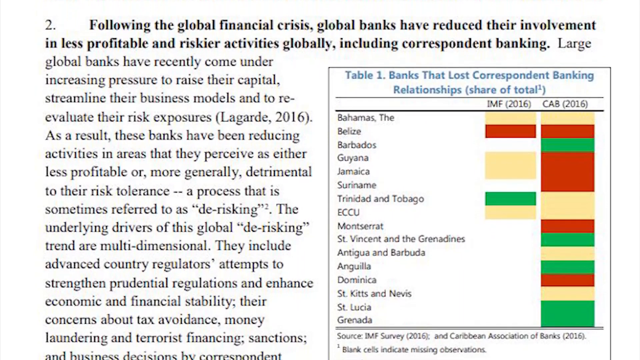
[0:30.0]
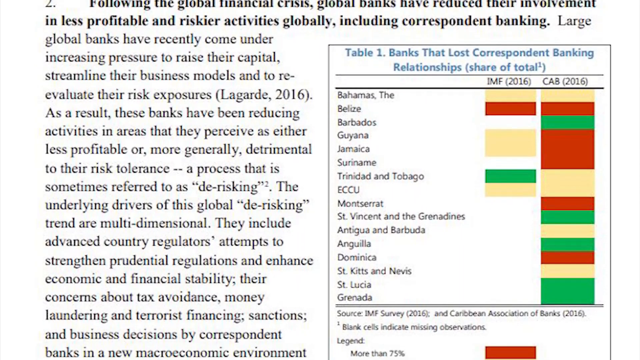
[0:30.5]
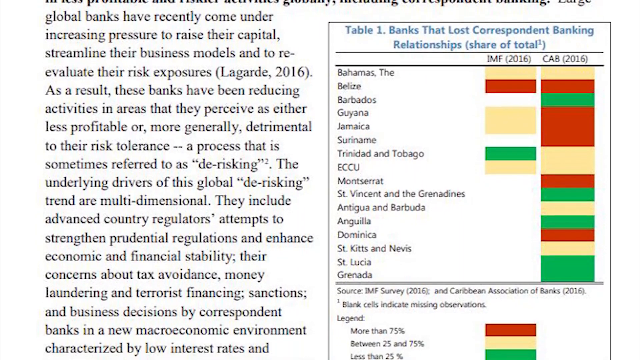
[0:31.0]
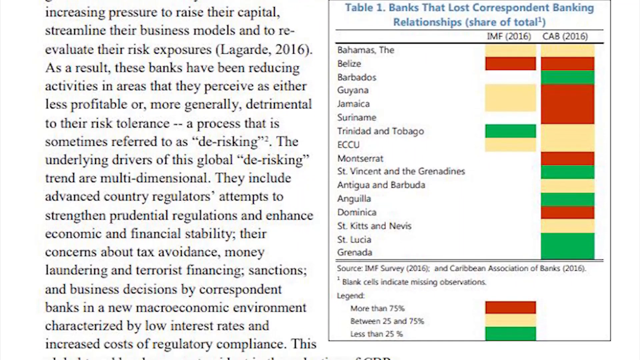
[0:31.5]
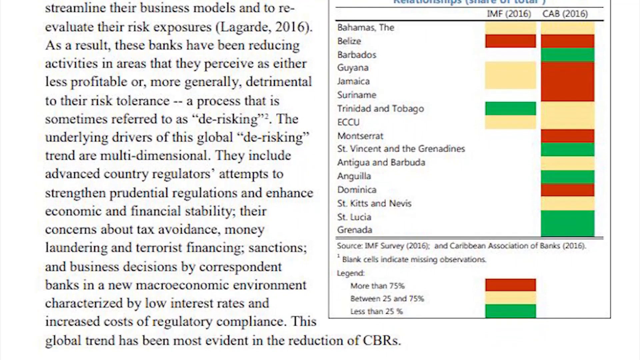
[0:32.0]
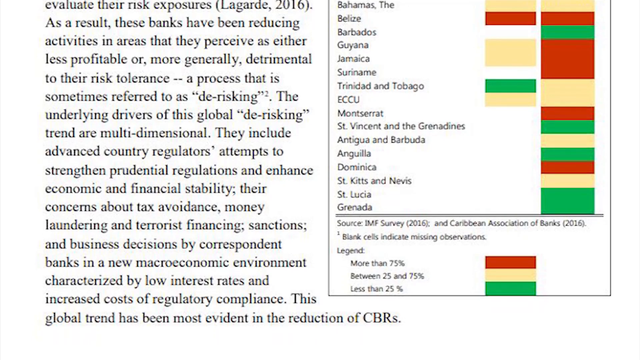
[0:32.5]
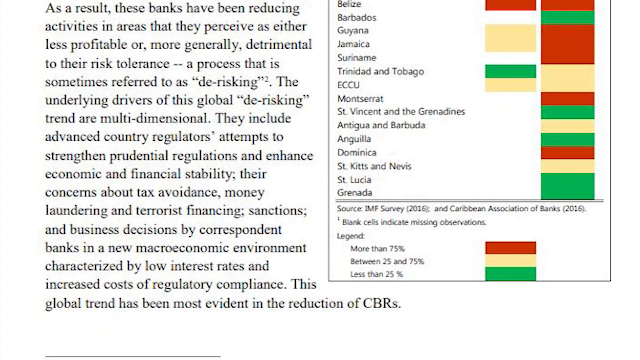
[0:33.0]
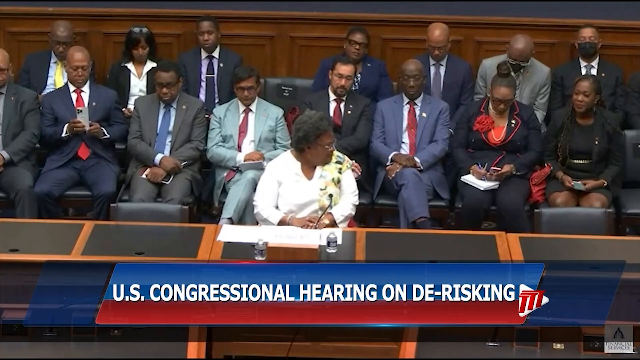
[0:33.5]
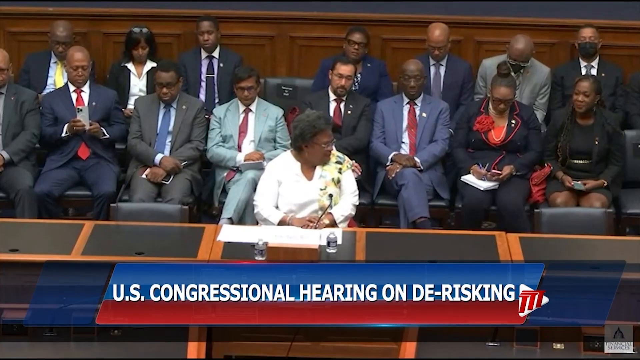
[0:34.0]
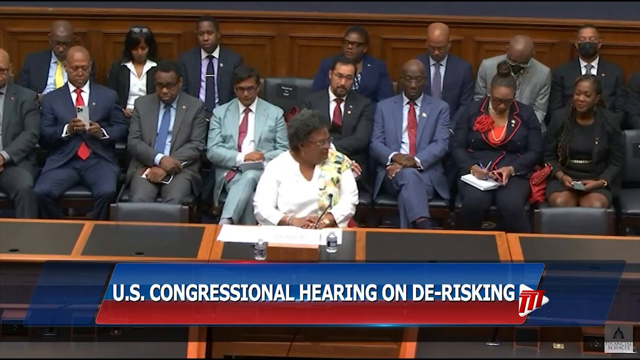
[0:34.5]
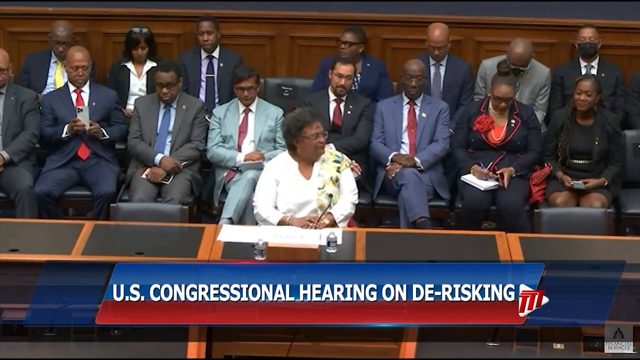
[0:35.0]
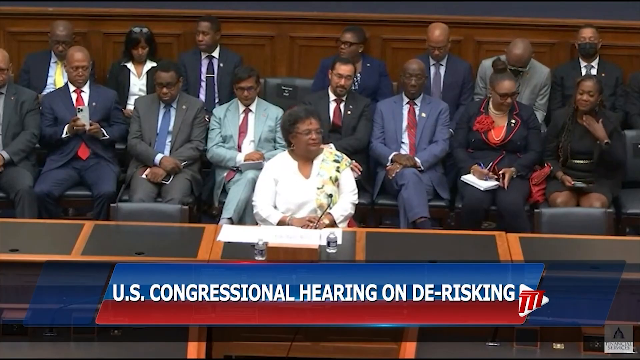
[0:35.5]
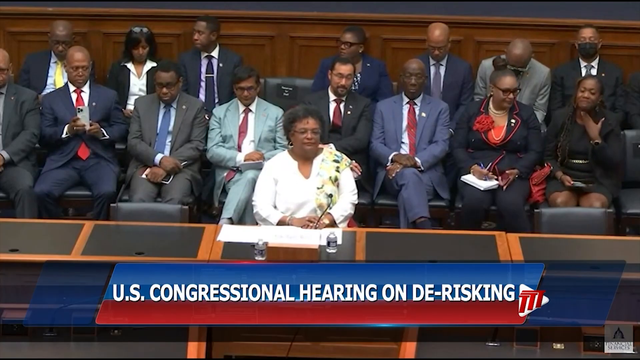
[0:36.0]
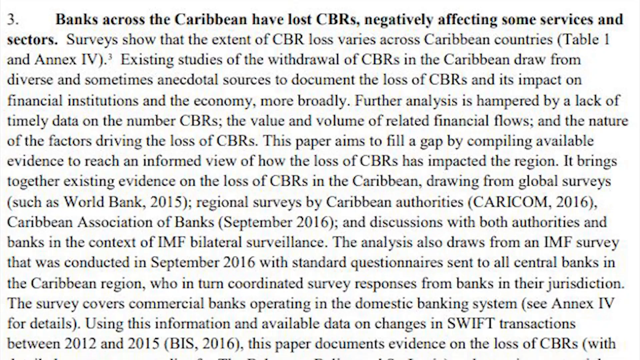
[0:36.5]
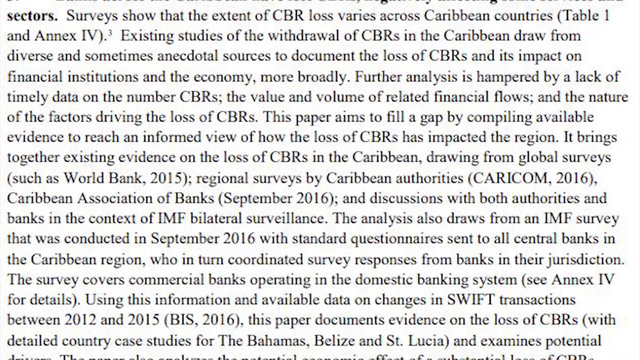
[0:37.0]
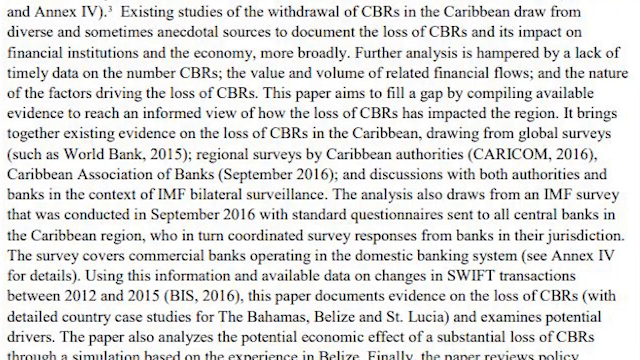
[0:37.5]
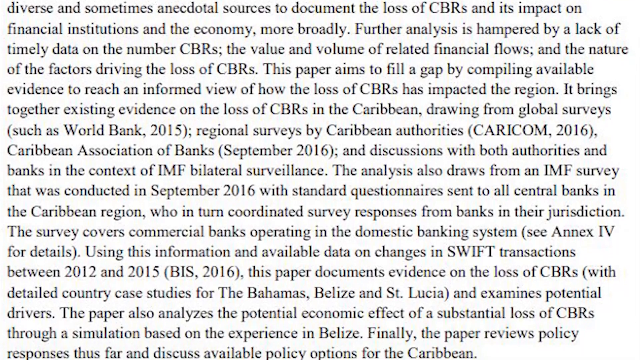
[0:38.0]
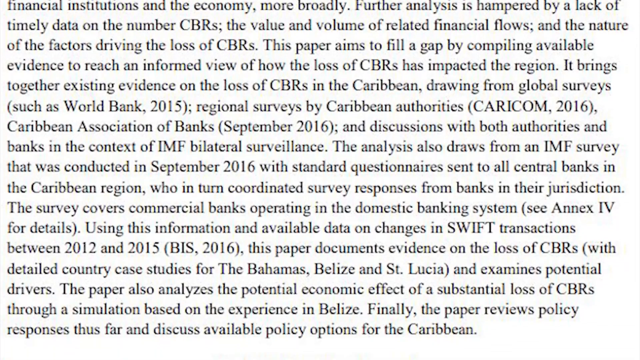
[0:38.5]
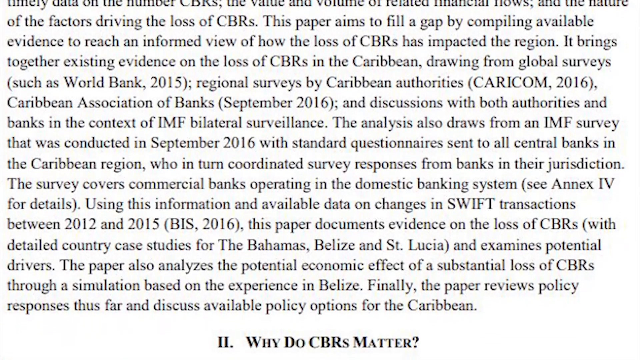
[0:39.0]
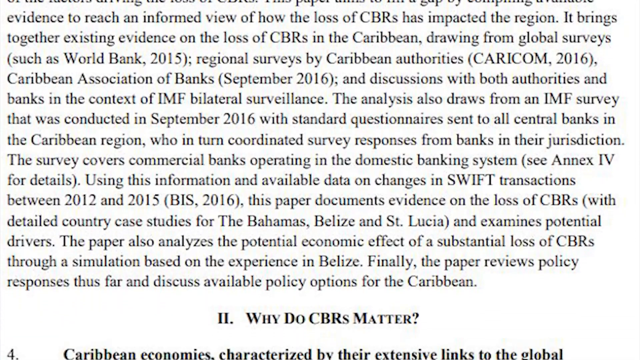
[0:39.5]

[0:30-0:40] A document continues on screen. Bold text reads "following the global financial crisis, global banks have reduced their involvement in less profitable and riskier activities globally, including correspondent banking." The text then switches to regular black font, no longer bold, and reads "large global banks have recently come under increasing pressure to raise their capital, streamline their business models, and to reevaluate their risk exposures." A citation in parentheses reads "LAGARDE, 2016". The text continues "as a result, these banks have been reducing activities in areas that they perceive as" riskier.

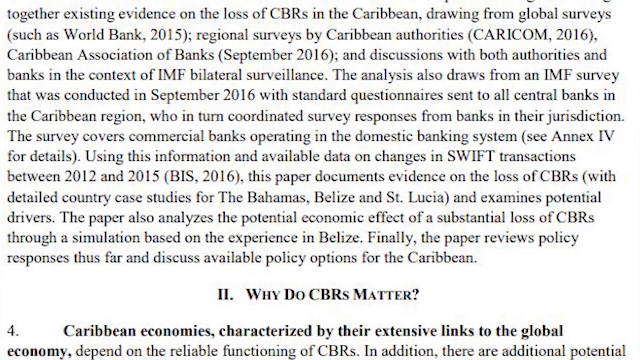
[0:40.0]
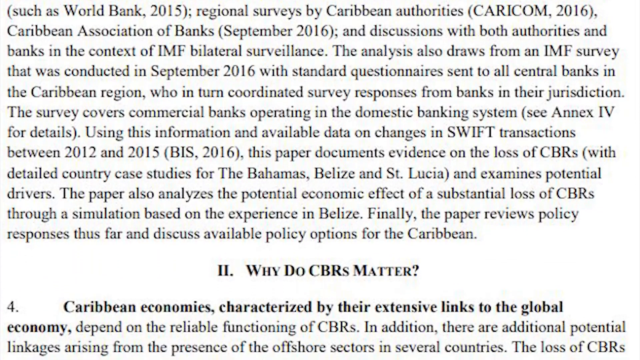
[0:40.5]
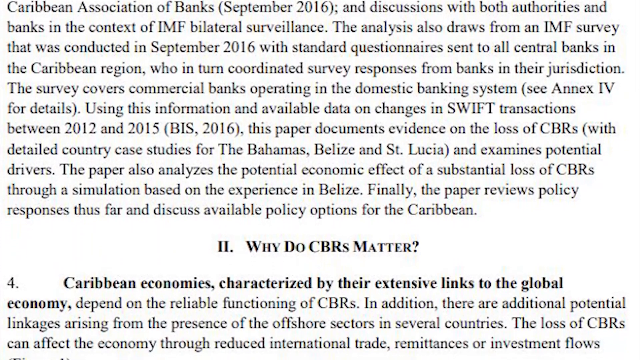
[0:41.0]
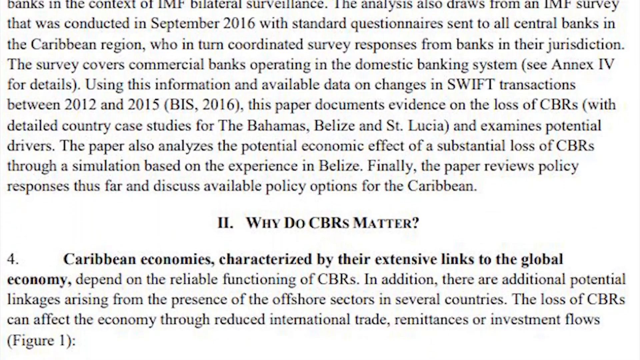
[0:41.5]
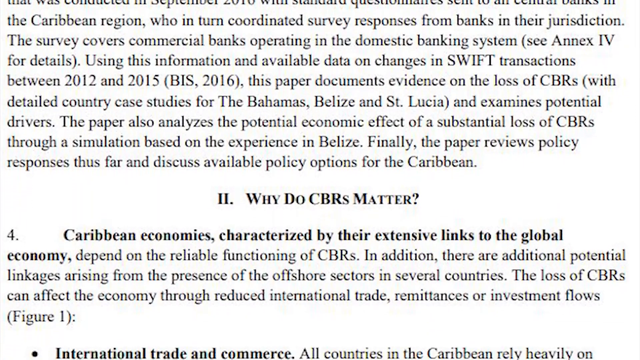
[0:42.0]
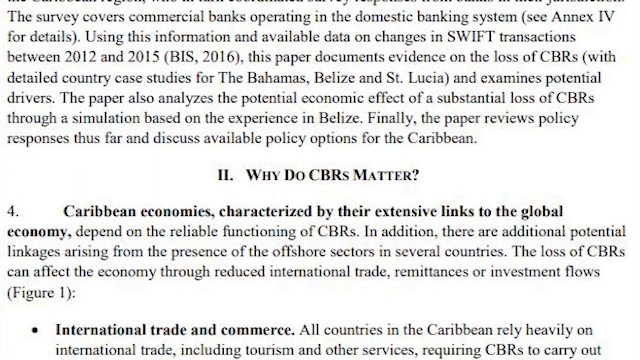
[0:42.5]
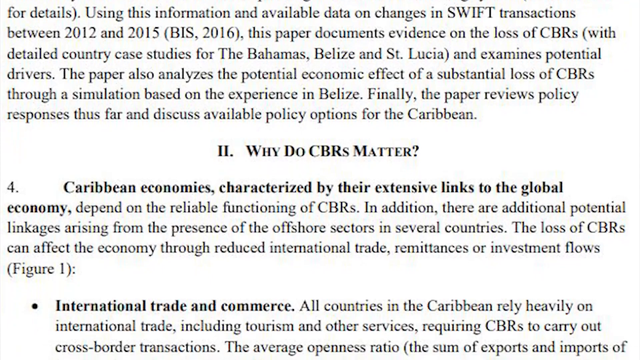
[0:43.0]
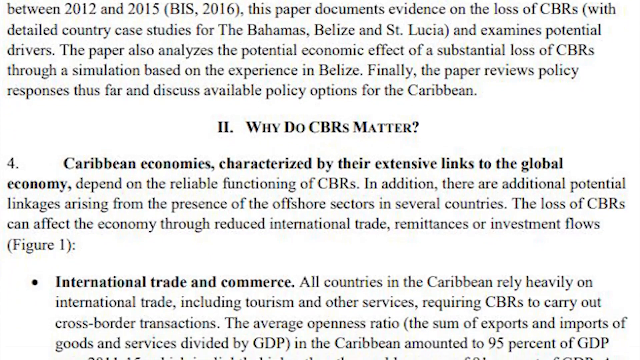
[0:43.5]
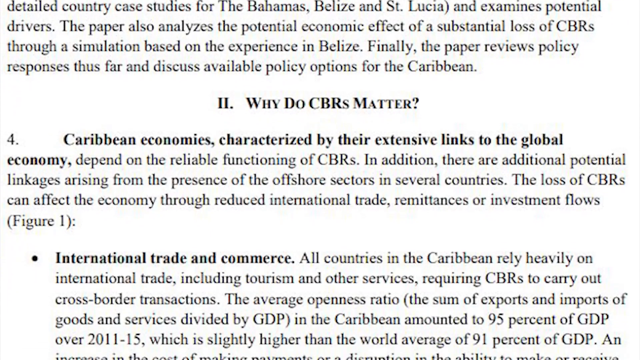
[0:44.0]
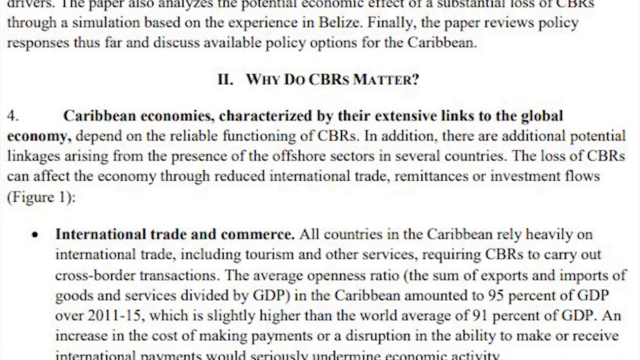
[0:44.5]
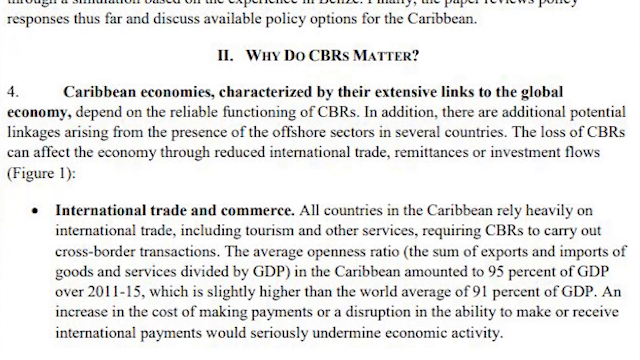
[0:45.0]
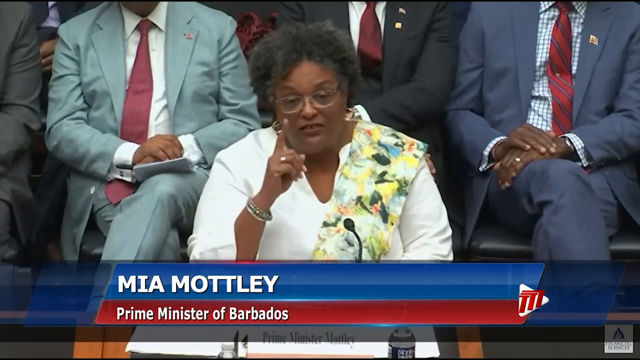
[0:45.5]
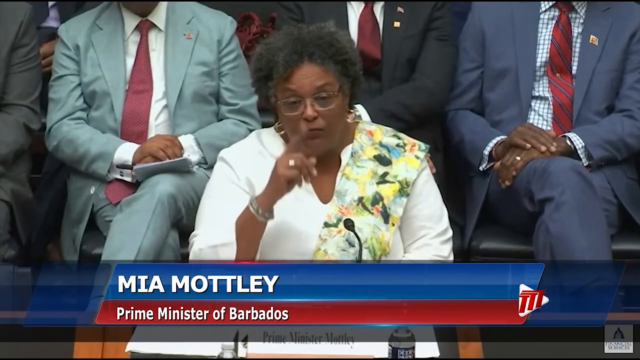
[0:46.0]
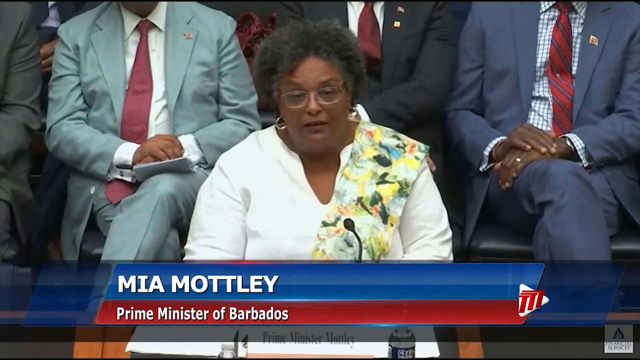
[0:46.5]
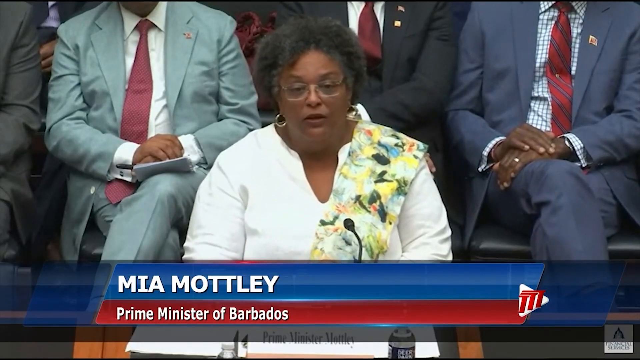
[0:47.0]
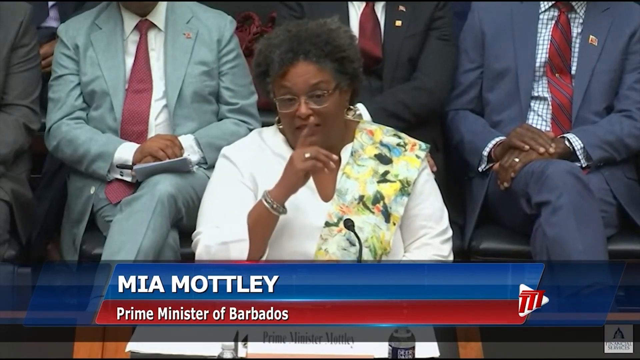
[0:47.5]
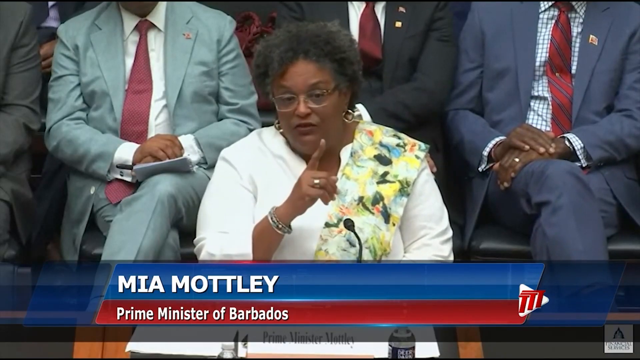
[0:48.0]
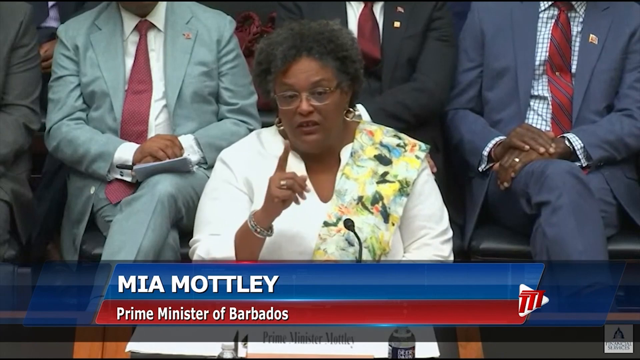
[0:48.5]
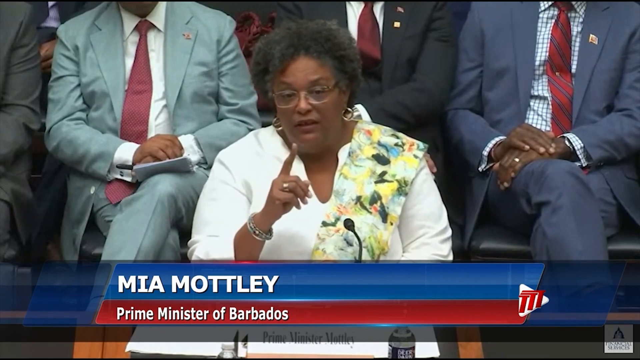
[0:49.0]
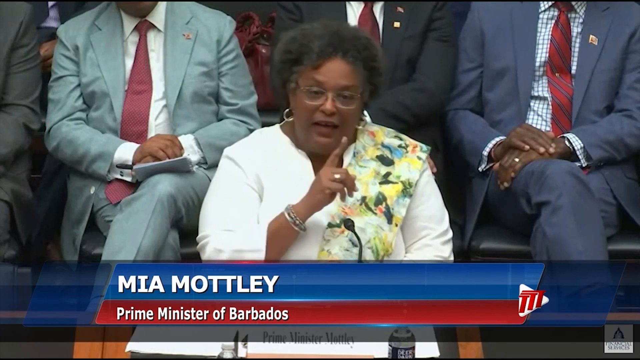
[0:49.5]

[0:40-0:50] More of the document is shown. It reads "that was concluded in 2016 with standard questionnaires sent to all central banks in the Caribbean region, who in turn coordinated survey responses from banks in their jurisdiction. The survey covers commercial bank operating in a domestic banking system using this information and available data on changes and swift transactions from 2012 and 2015. This paper document evidence on the loss of CBRs", followed by a parenthetical listing detailed country case studies from the Bahamas, Belize and St. Lucia, with "St." abbreviated rather than spelled out. It continues "and examines potential drivers. The paper also analyzes the potential economic effect of substantial loss of CBRs through a simulation based on experience in Belize." It then reads "finally, the paper reviews policy responses thus far and discusses available policy options for the Caribbean."